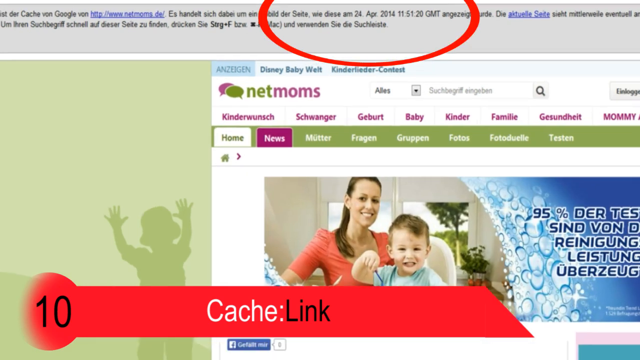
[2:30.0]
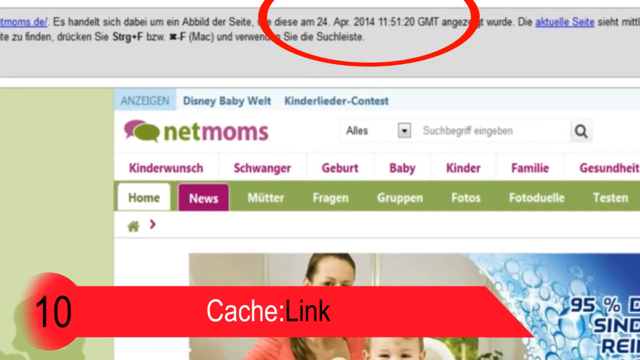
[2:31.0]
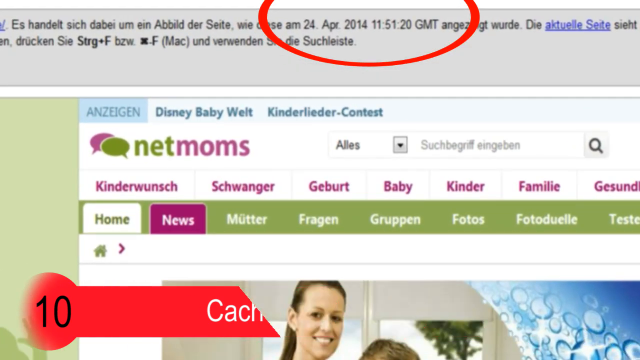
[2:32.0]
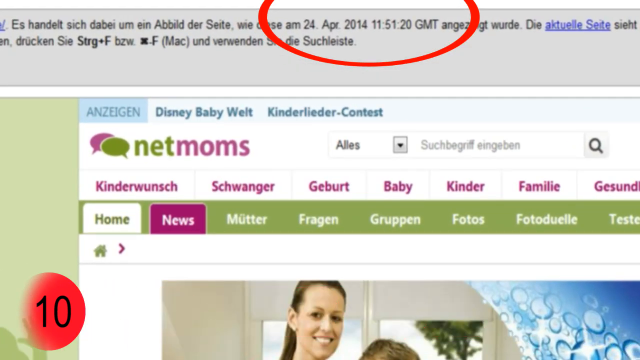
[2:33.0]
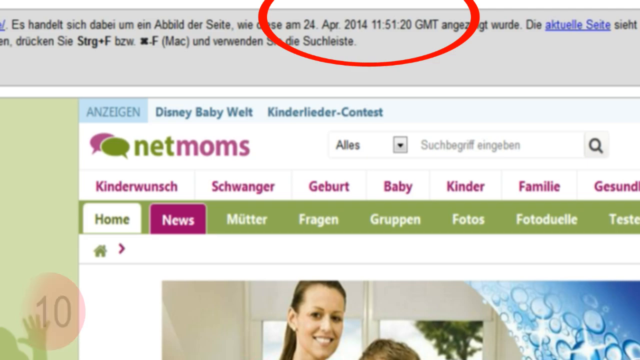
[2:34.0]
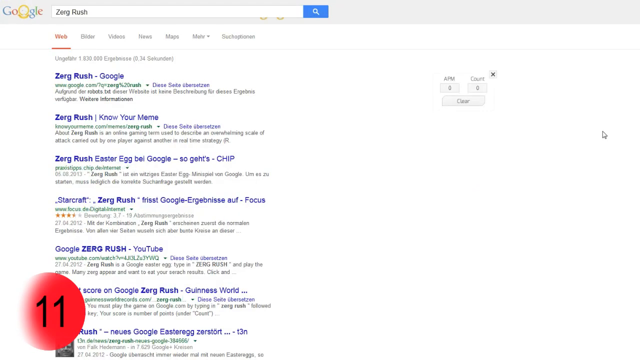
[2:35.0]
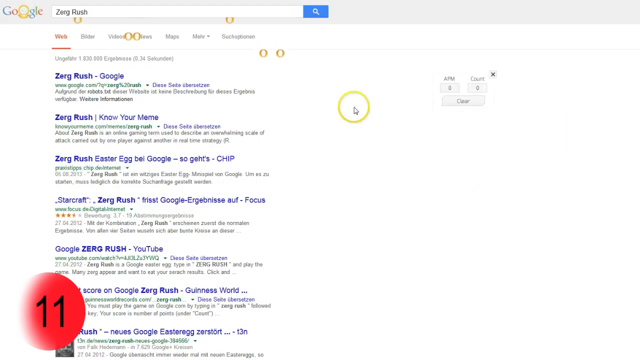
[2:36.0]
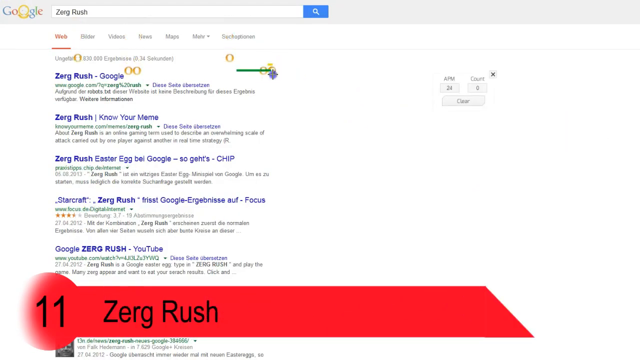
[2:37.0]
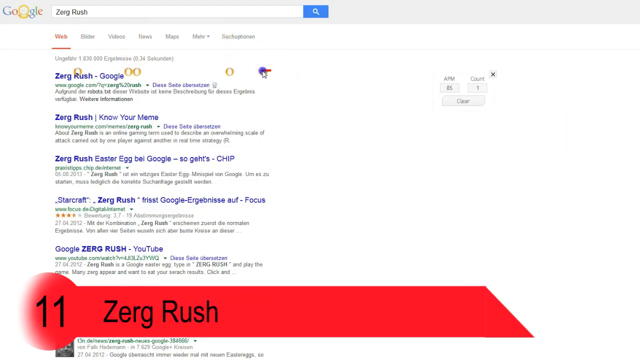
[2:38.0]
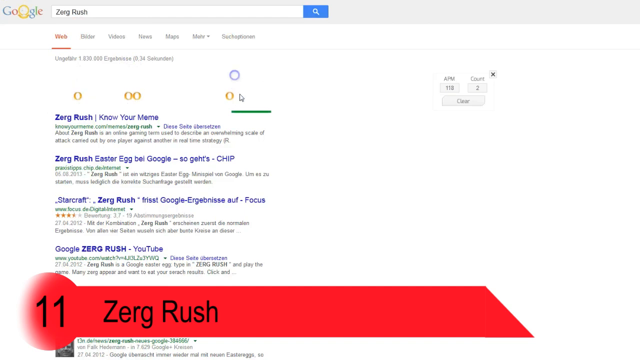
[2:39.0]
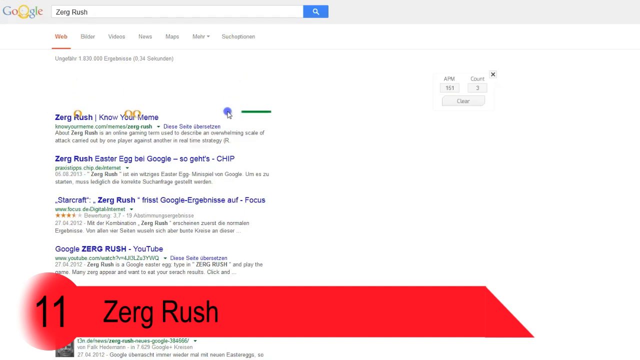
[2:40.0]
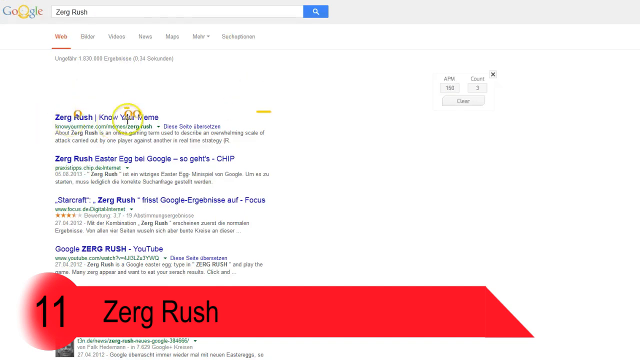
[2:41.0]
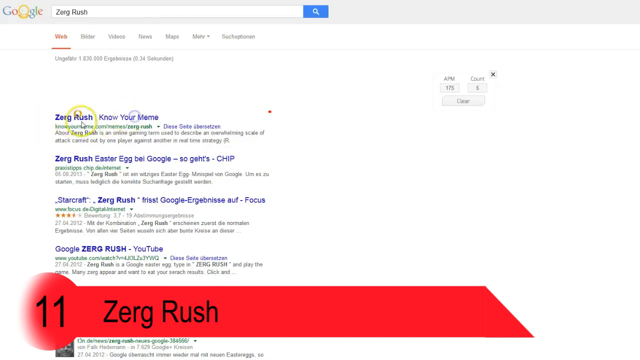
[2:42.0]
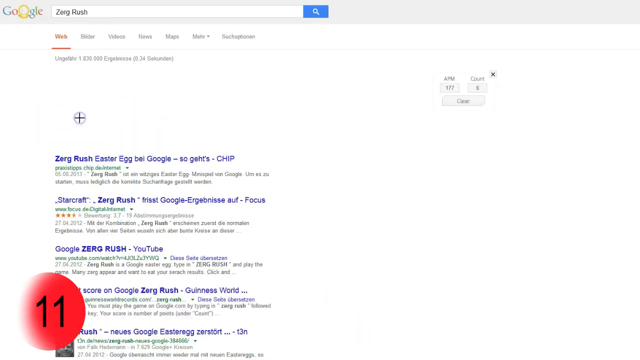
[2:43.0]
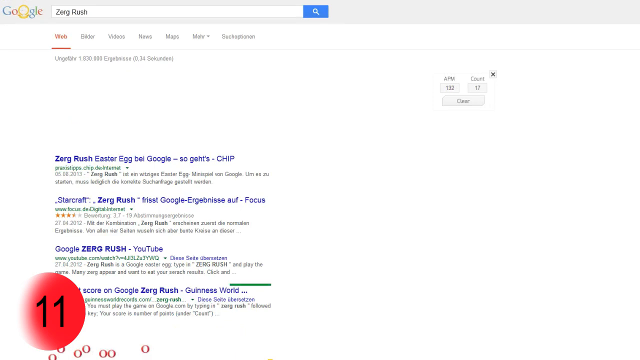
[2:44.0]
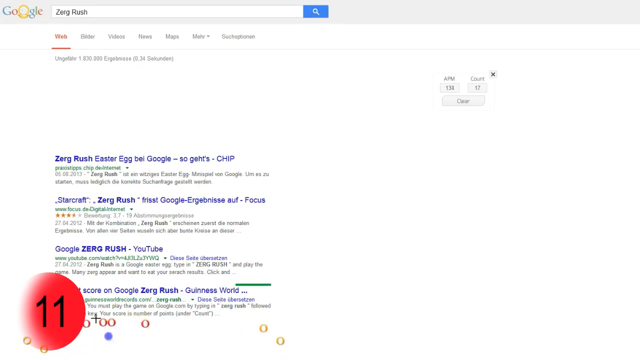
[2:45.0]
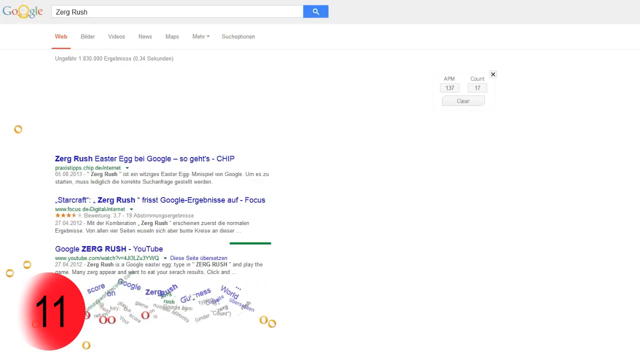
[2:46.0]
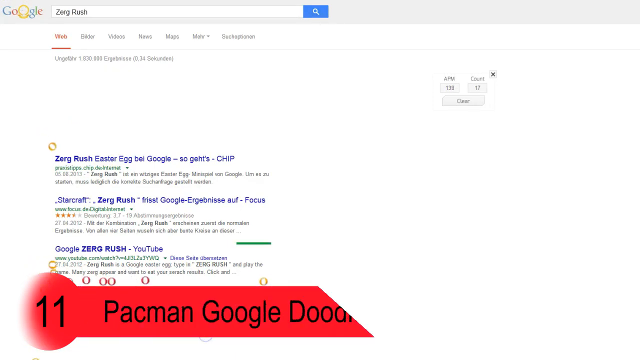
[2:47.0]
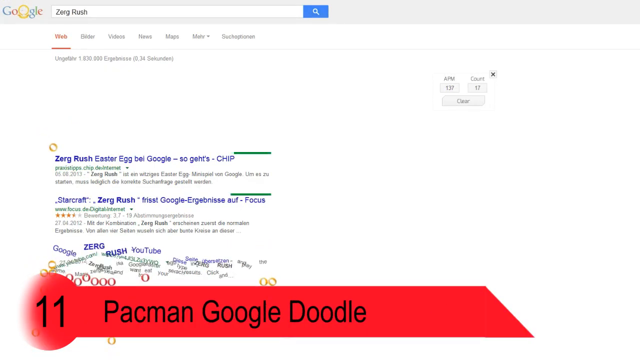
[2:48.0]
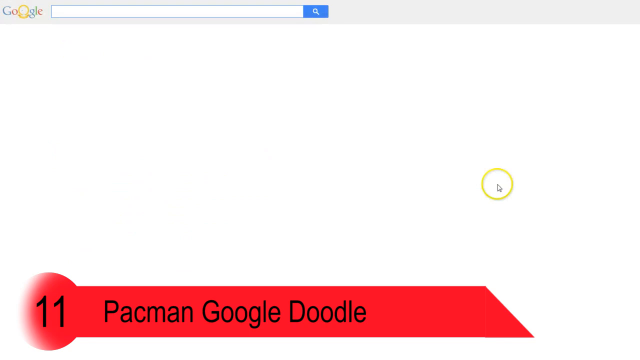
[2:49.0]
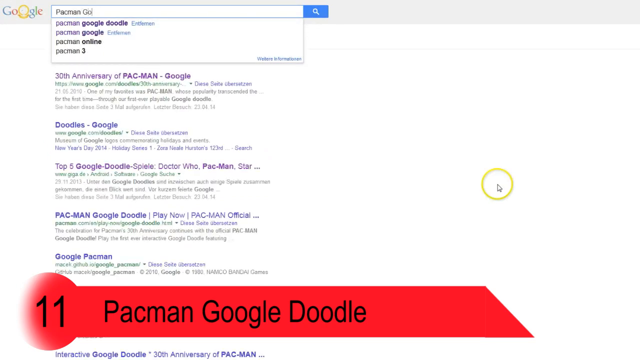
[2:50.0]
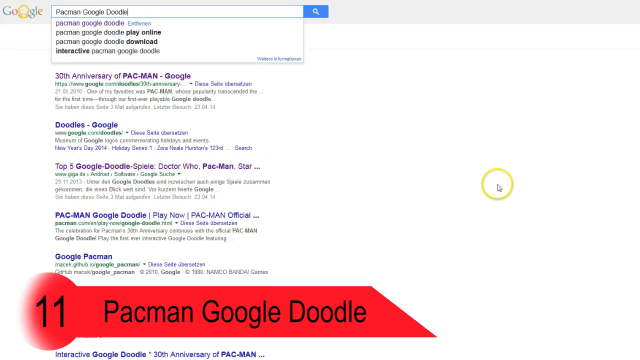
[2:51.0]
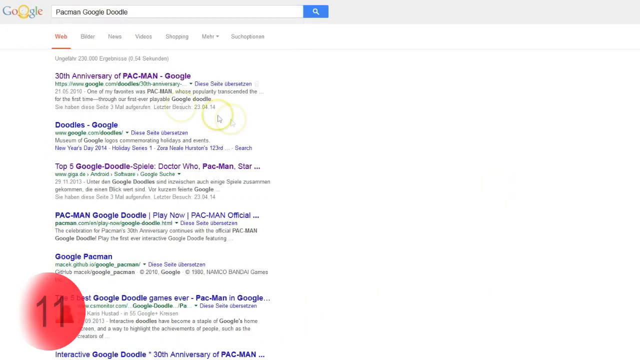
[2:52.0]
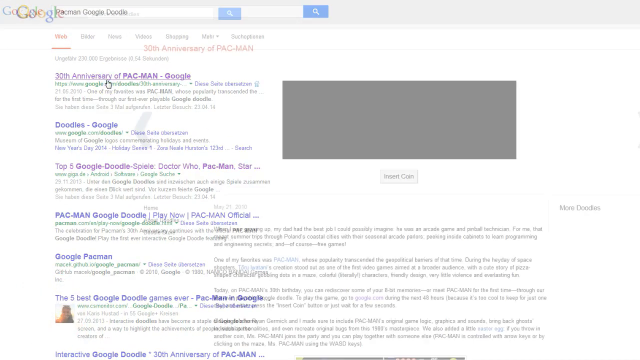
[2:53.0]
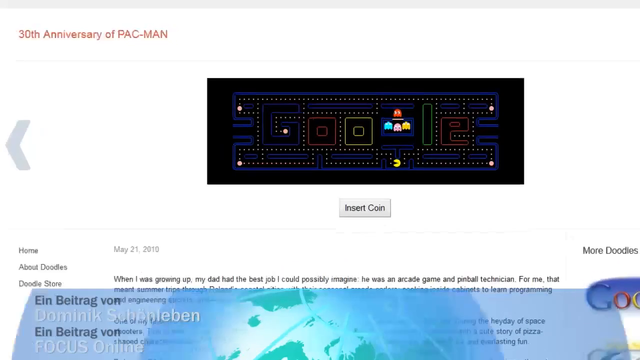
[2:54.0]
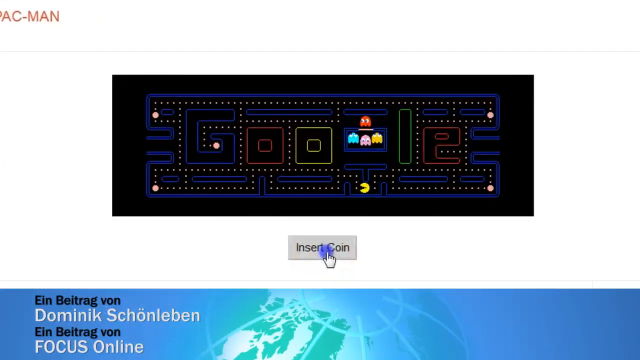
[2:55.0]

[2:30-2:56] A website called Net Moms shows a mom sitting at the dinner table with her son; the entire website is in German, as are all the words on screen. A grey banner is at the very top of the screen, and the person recording circles the date and time on it while zooming in. Another page then opens to Google, with "Zerg Rush" in the search bar. At the bottom of the screen is the number 11 with the words "Zerg Rush" on a red banner. Gold rings fall from the search bar and crash onto the search results, causing them to disappear. Multiple O's then appear at the bottom of the screen and attack all of the search results. In another tab, "Pac-Man Google Doodle" is typed in the search bar, with the number 11 on a red banner at the bottom of the screen that says "Pac-Man Google Doodle". After searching, they click on the first website, which opens a Pac-Man game.